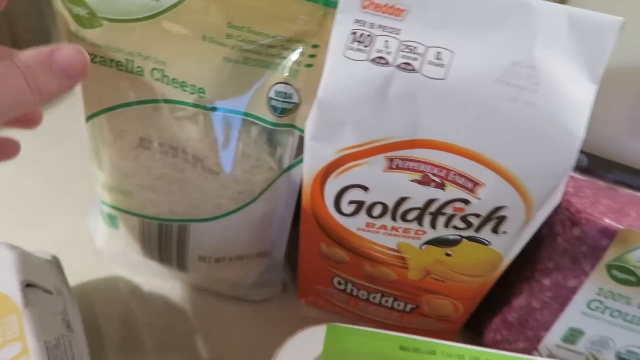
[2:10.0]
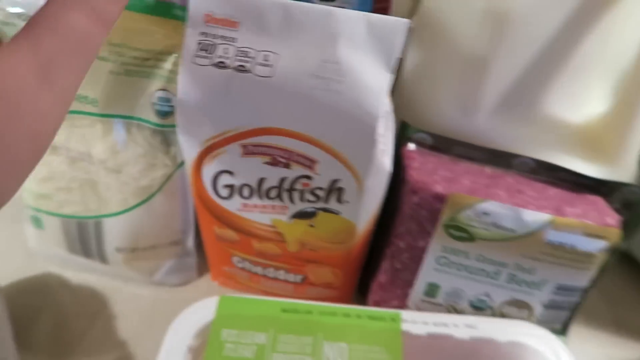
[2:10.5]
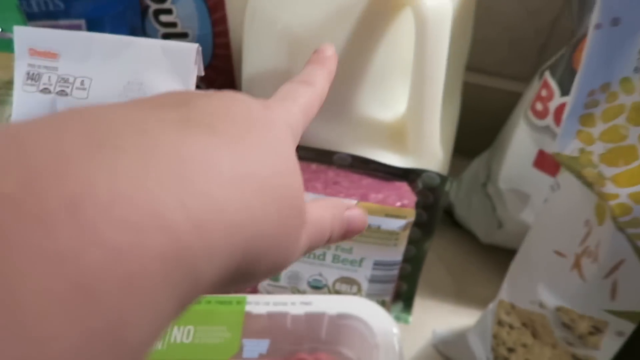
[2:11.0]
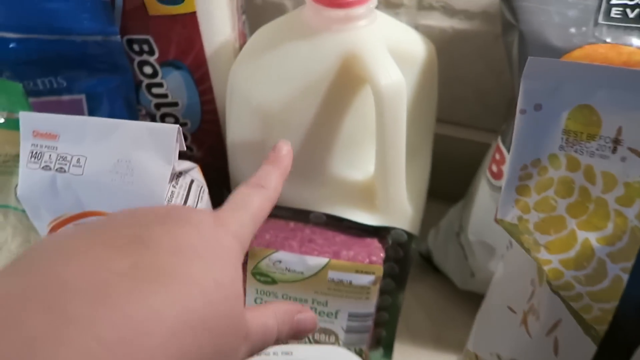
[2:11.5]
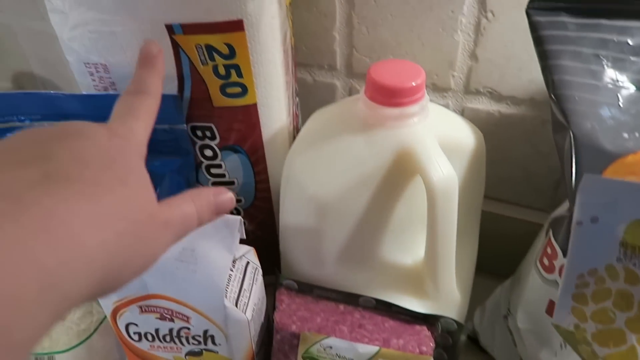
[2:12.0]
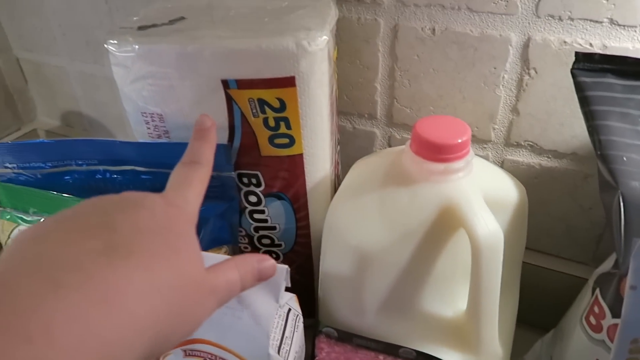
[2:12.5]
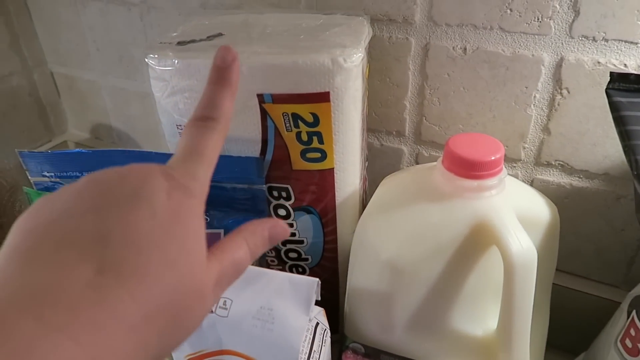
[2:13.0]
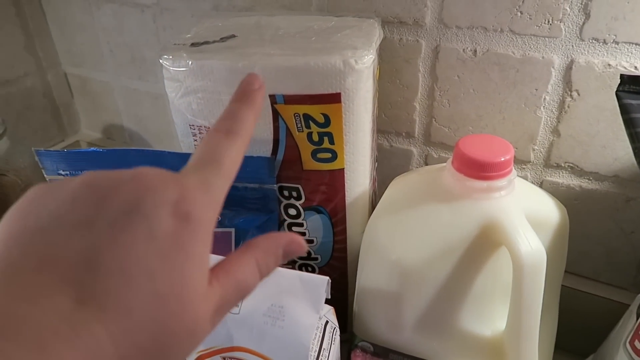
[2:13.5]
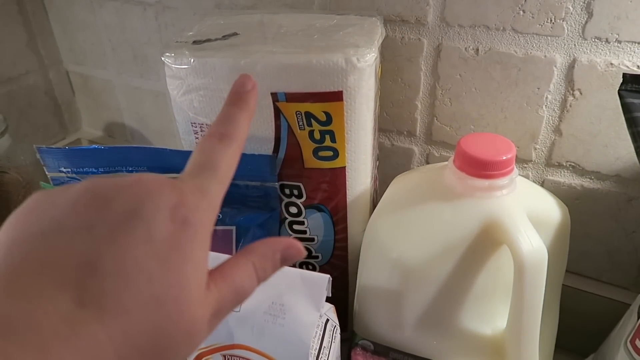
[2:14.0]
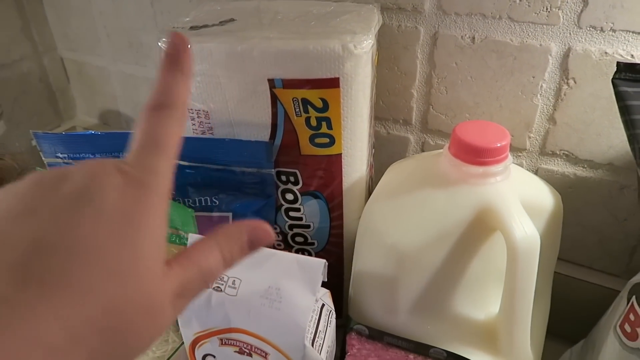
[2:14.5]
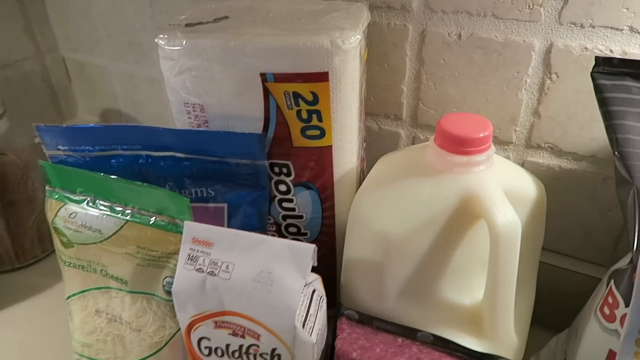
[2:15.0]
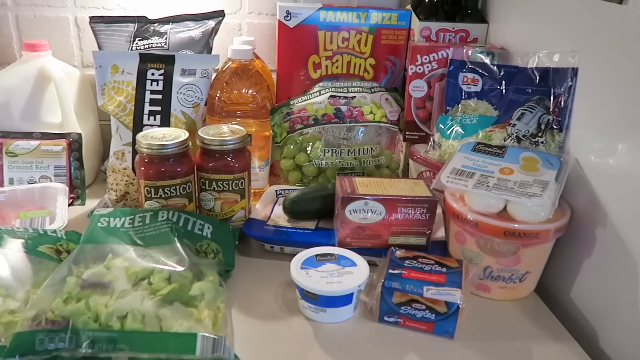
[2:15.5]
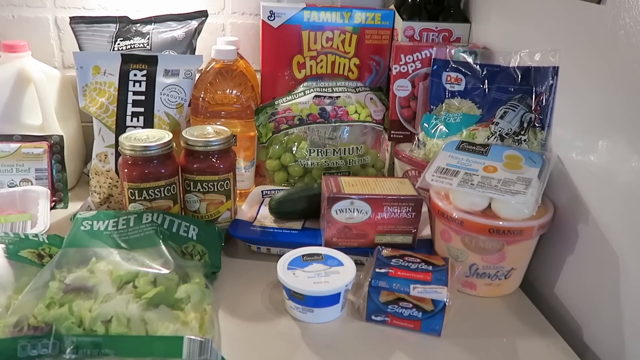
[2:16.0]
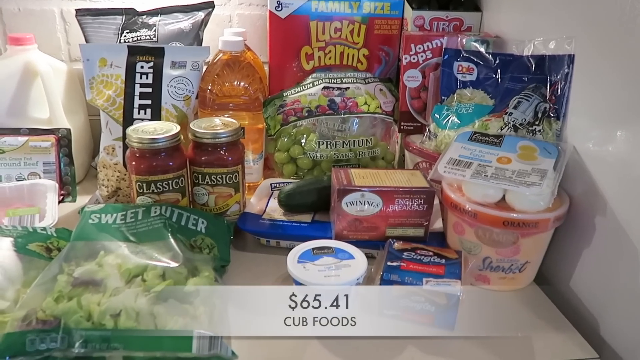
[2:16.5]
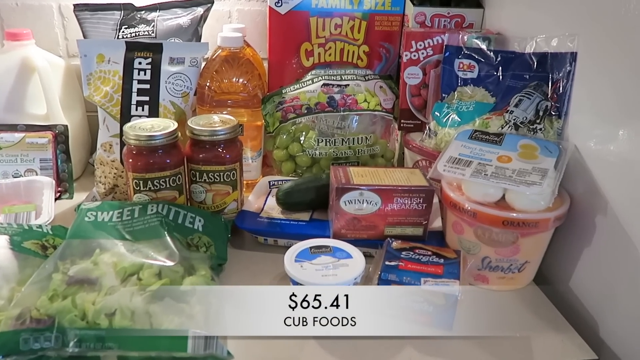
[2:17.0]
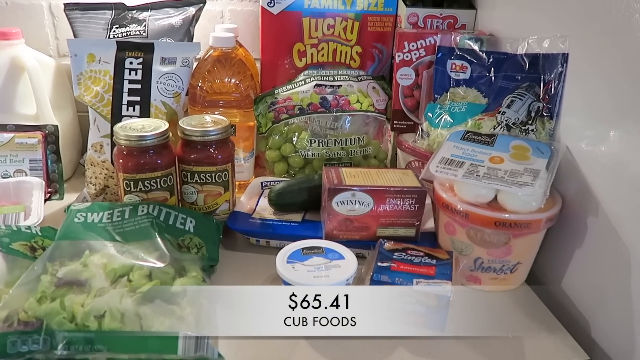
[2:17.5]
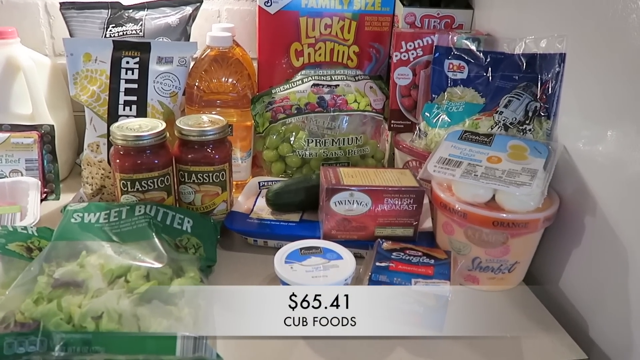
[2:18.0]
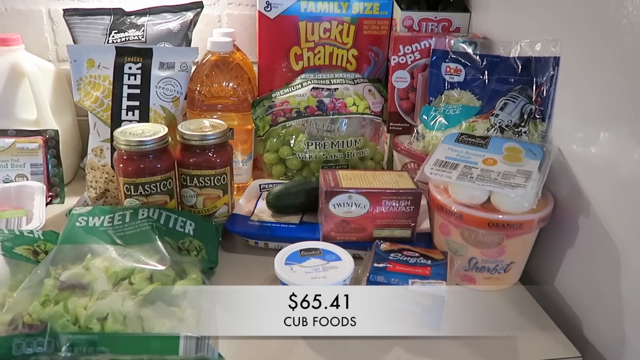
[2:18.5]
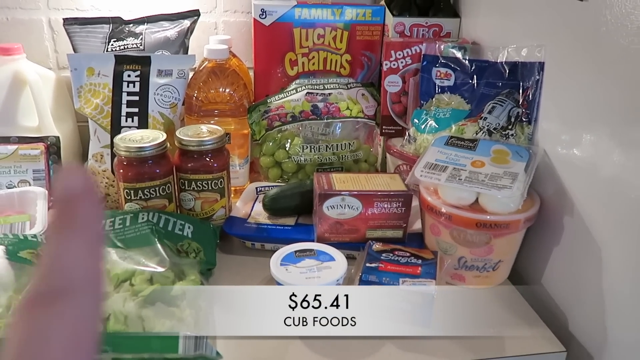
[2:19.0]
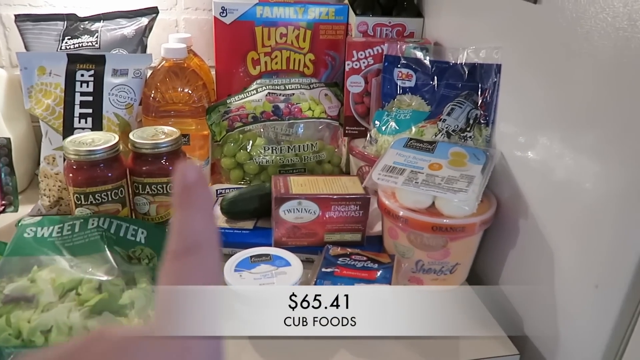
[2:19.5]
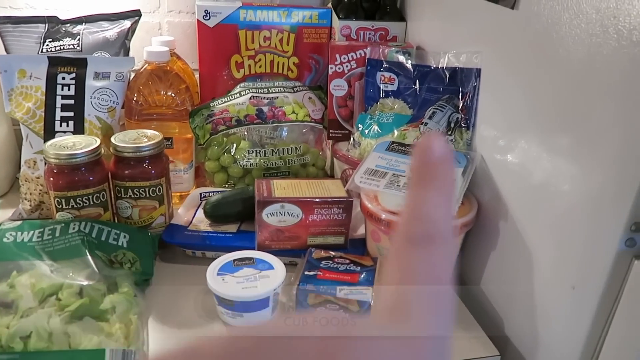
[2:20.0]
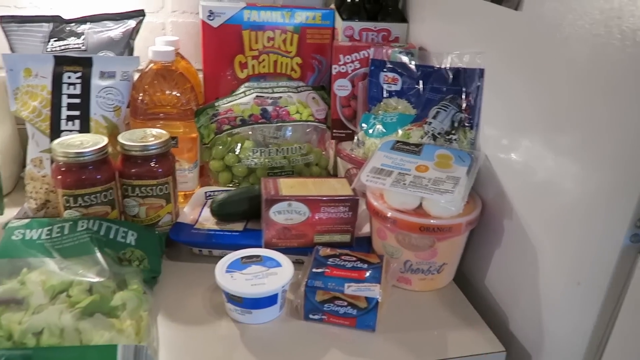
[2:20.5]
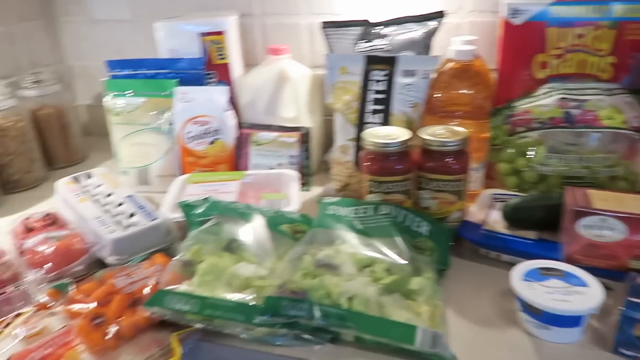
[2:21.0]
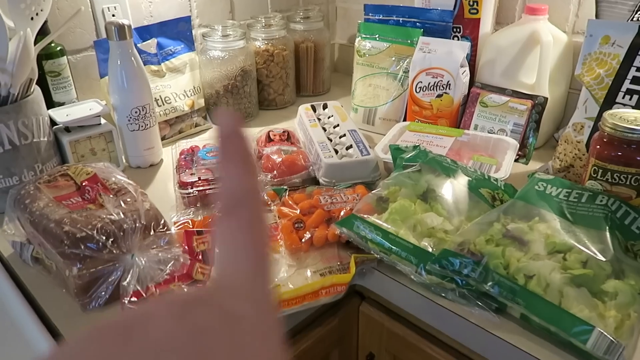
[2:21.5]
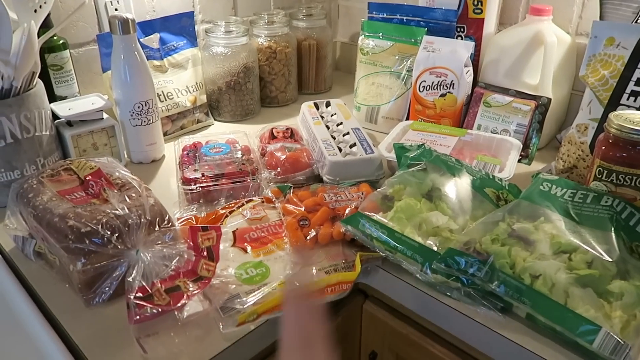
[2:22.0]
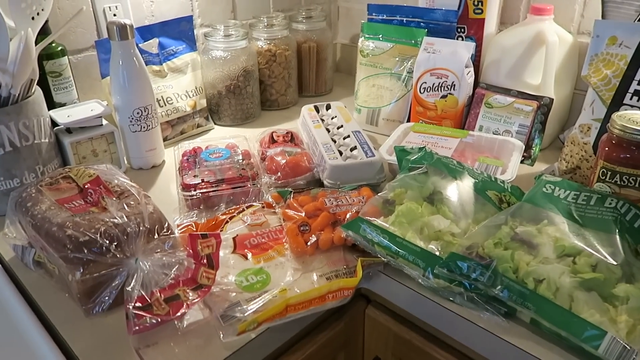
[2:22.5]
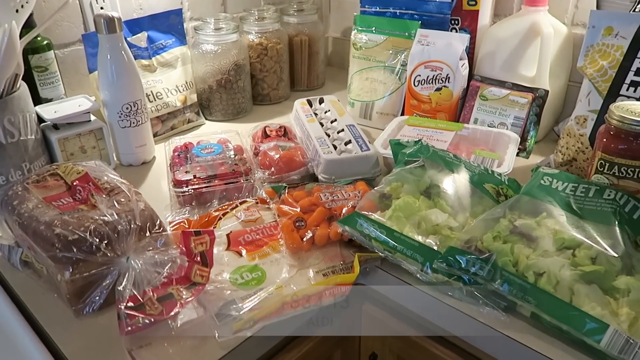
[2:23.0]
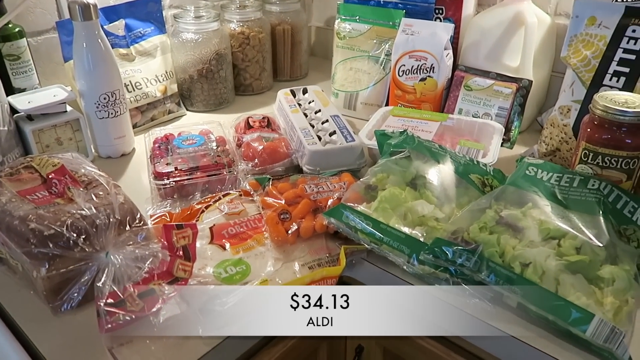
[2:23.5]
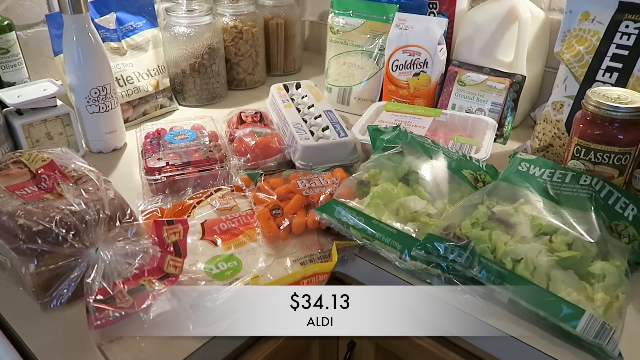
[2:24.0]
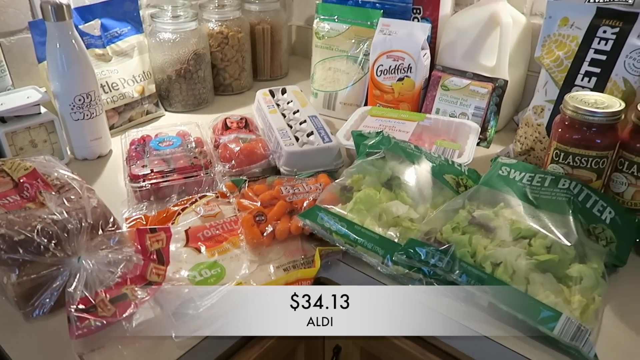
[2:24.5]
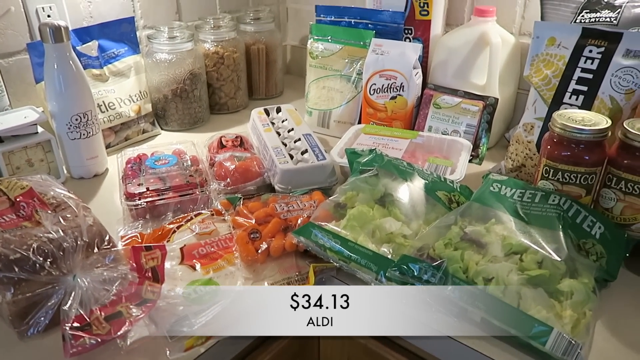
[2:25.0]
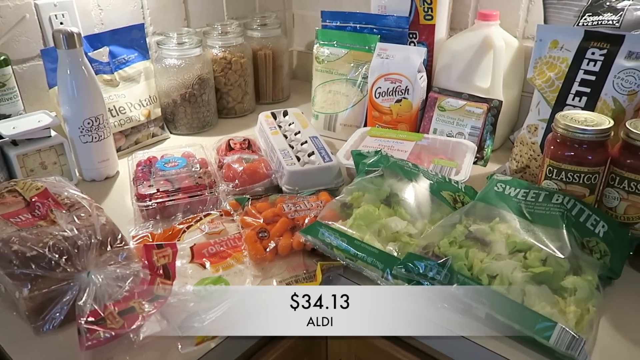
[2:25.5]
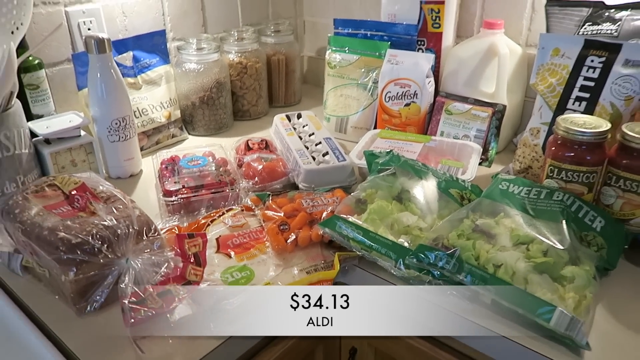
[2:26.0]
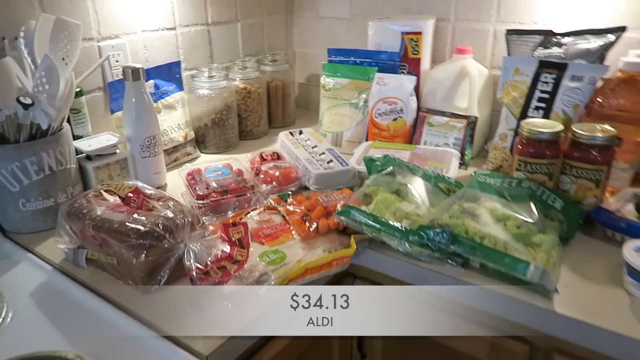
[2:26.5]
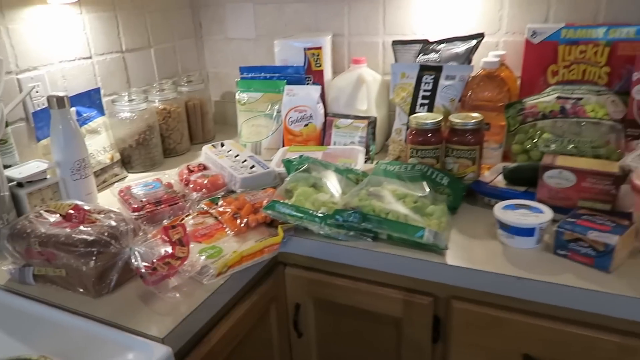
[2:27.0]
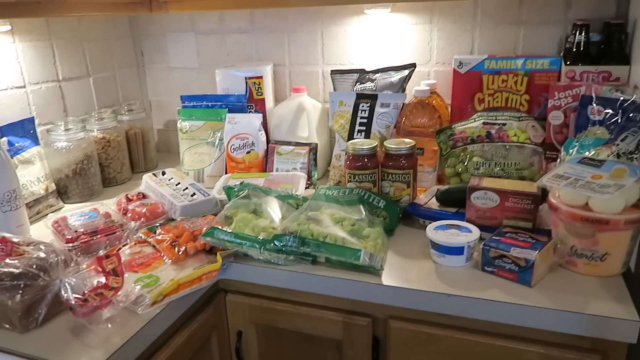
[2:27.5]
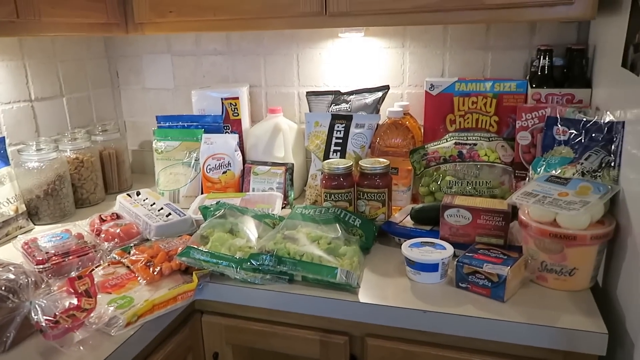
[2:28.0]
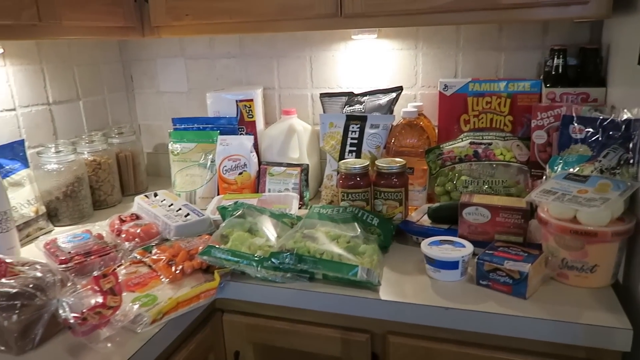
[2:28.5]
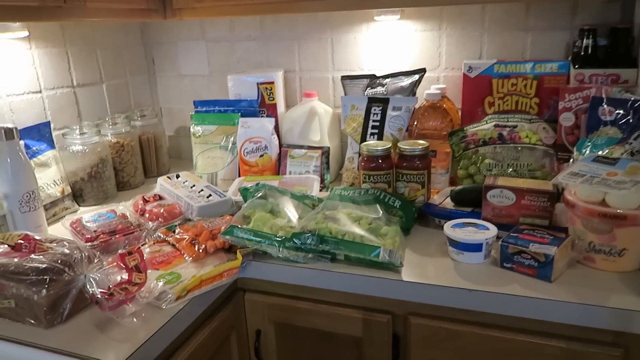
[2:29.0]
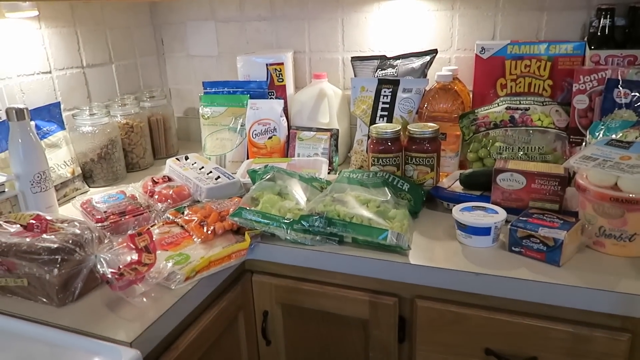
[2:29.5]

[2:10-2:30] The camera pans across as the hand points out the carton of milk, which has a red lid. Next to it there seems to be a package of possibly paper towels, with "250" on the front and a logo that apparently says "boulders". The camera zooms out again, showing mostly the right-hand side of the haul, and a caption pops up in a white box reading "$65.41 Cub Foods" while the finger keeps pointing and waving around. The focus then moves to the left-hand side of the screen, with the tomatoes, lettuce, carrots, tortillas, goldfish and so on, and the caption reads "$34.13 Aldi". The camera pans out to show all of the groceries together.